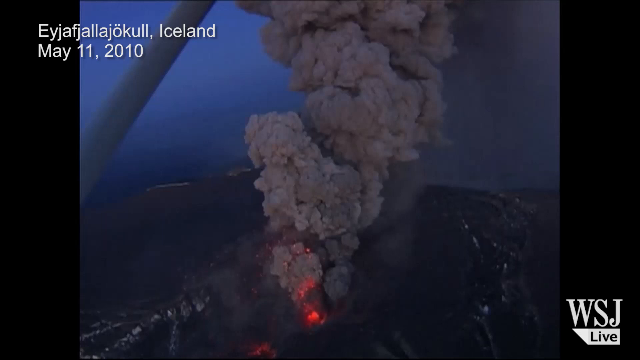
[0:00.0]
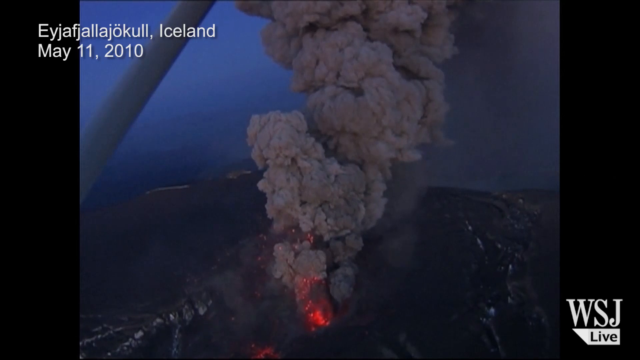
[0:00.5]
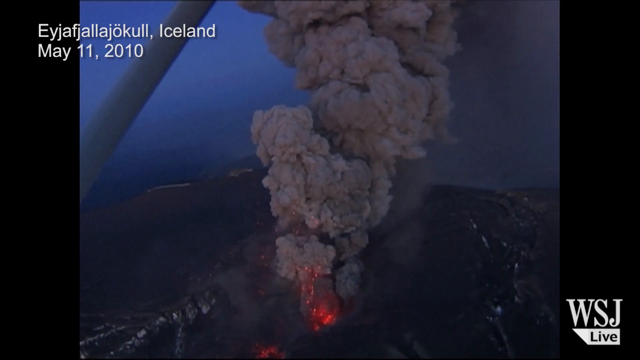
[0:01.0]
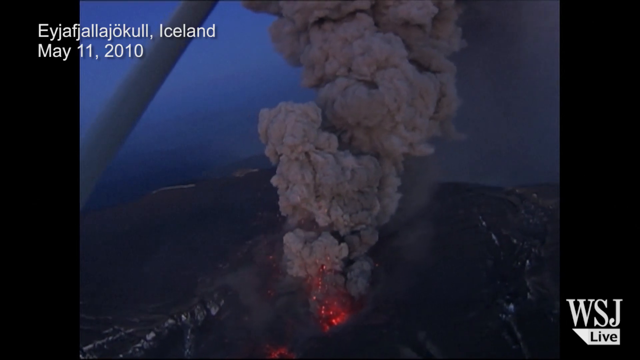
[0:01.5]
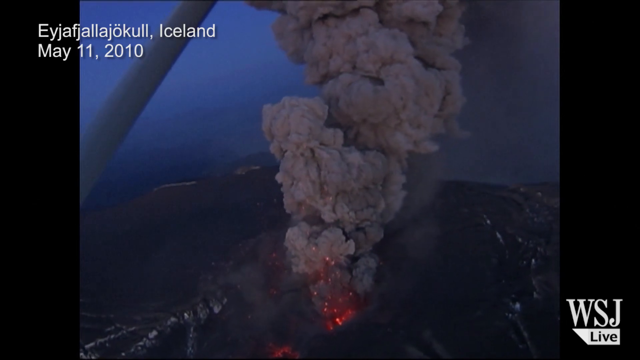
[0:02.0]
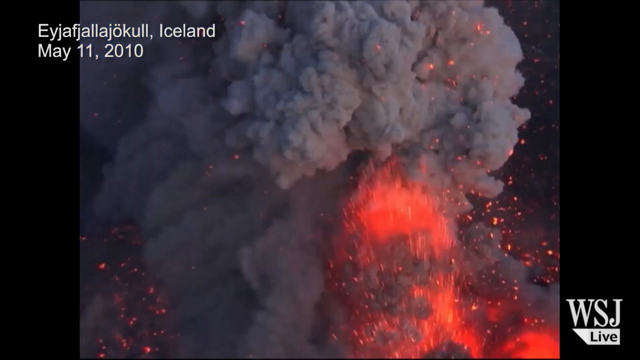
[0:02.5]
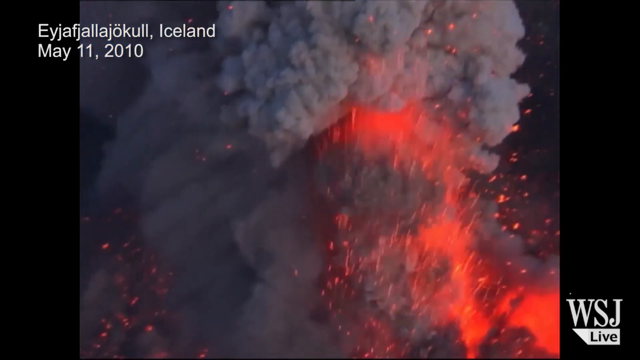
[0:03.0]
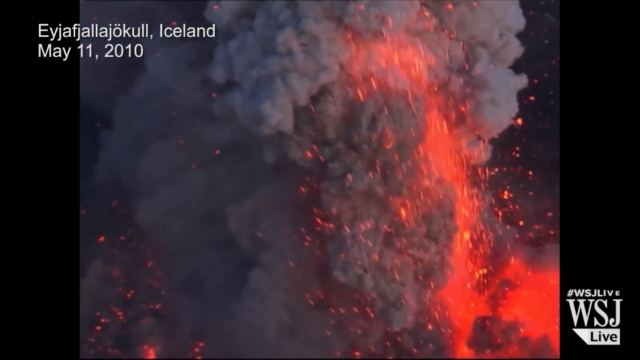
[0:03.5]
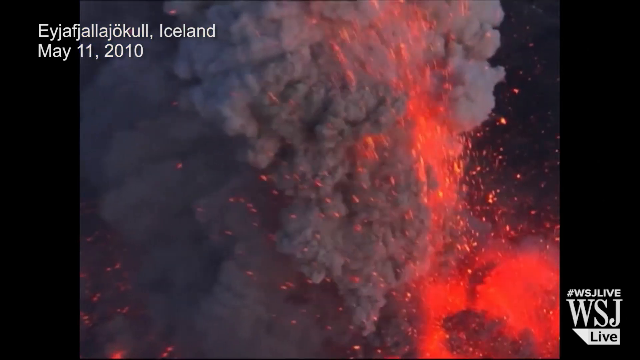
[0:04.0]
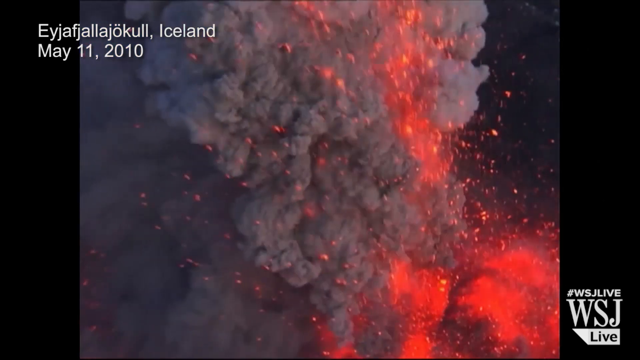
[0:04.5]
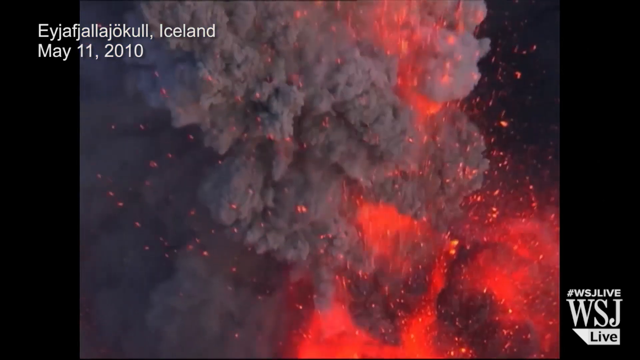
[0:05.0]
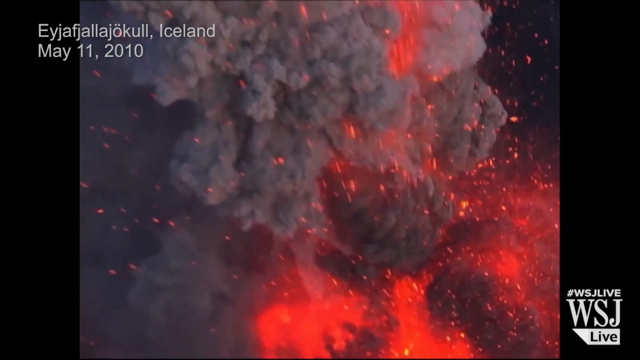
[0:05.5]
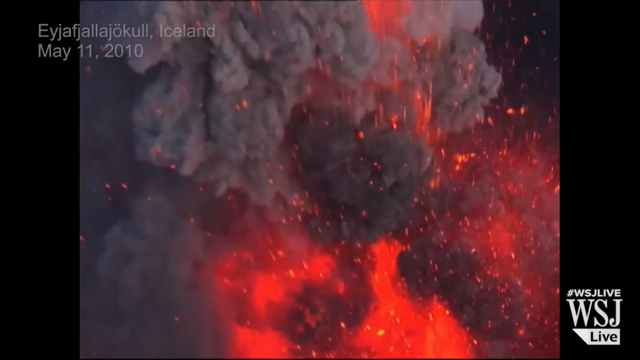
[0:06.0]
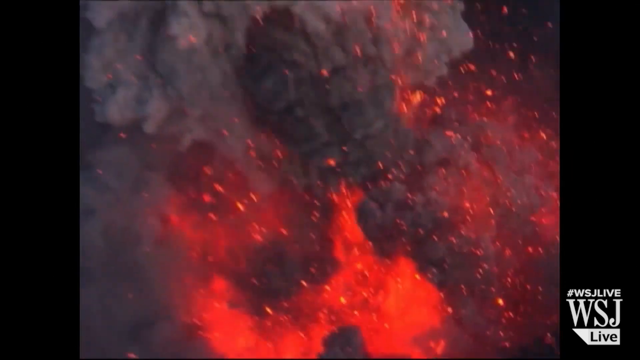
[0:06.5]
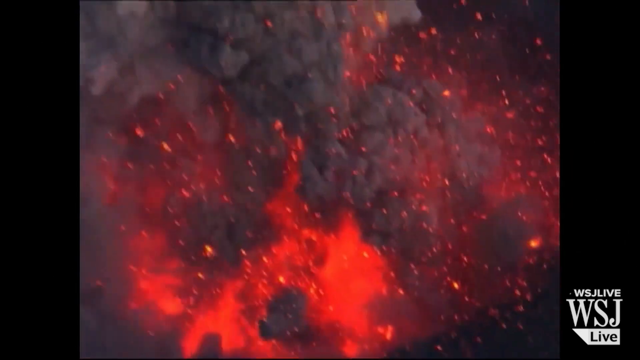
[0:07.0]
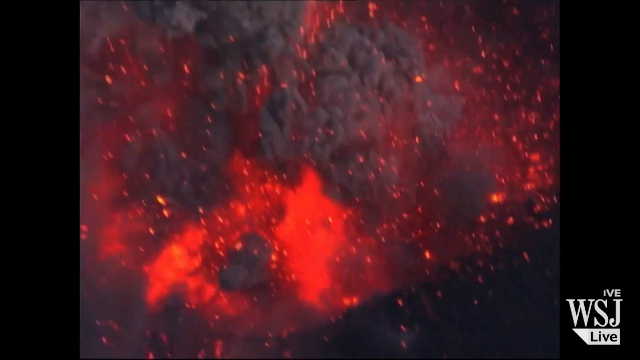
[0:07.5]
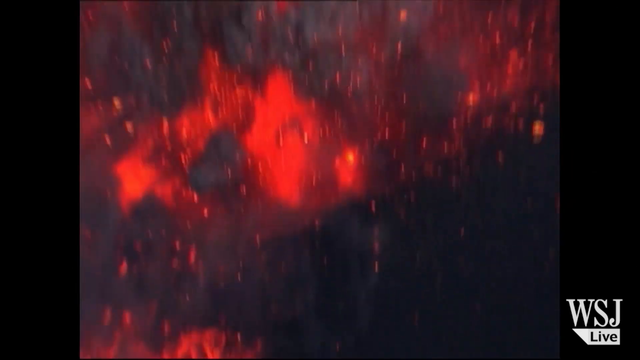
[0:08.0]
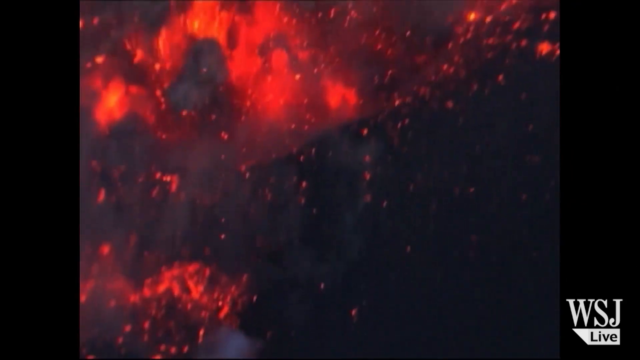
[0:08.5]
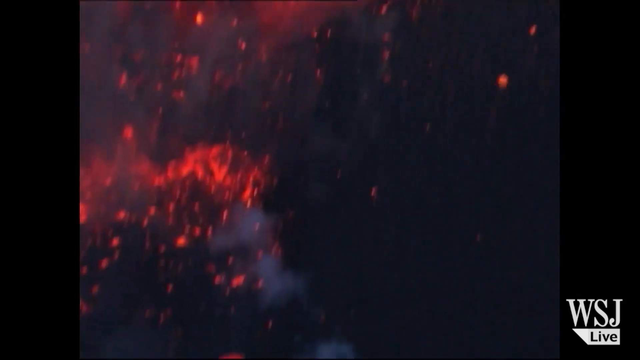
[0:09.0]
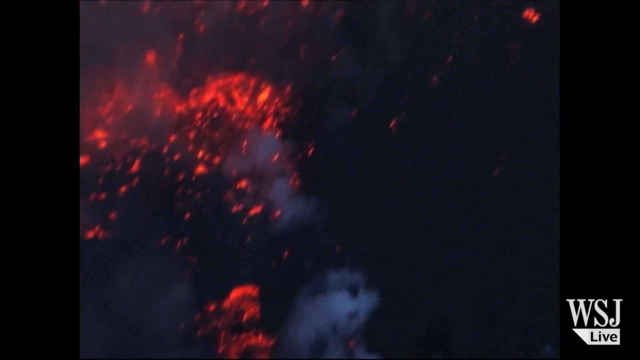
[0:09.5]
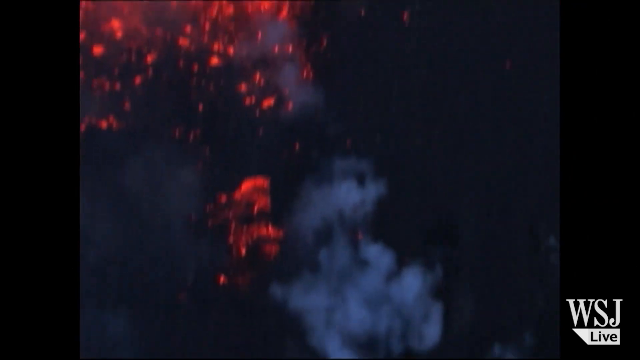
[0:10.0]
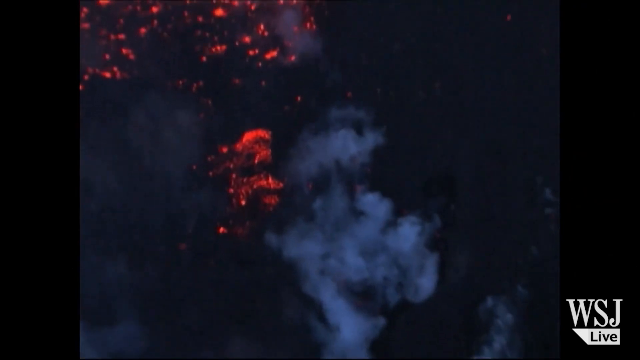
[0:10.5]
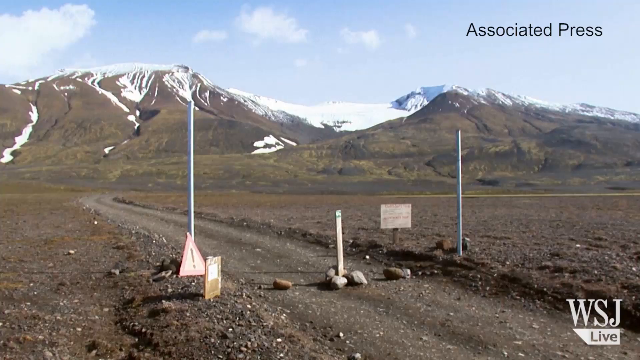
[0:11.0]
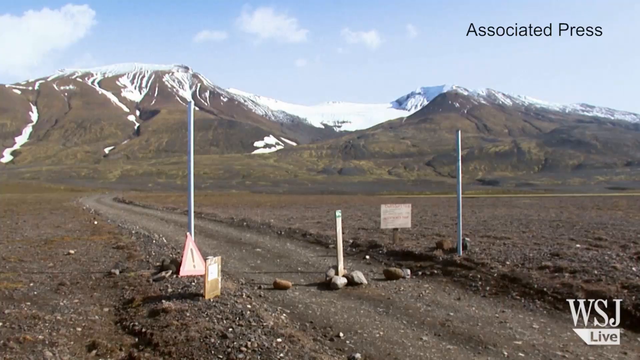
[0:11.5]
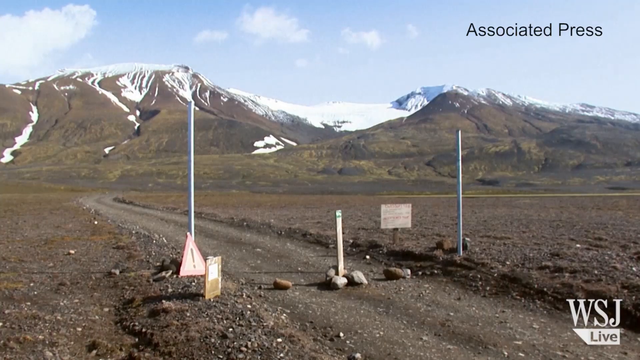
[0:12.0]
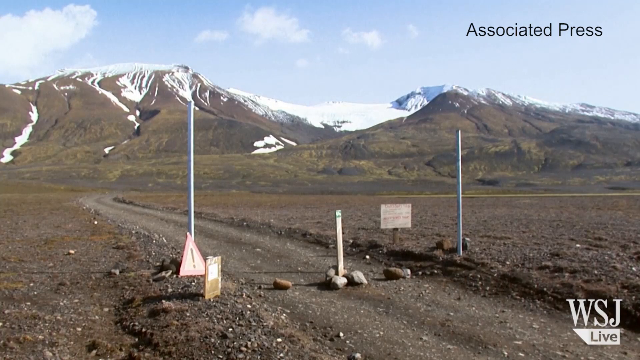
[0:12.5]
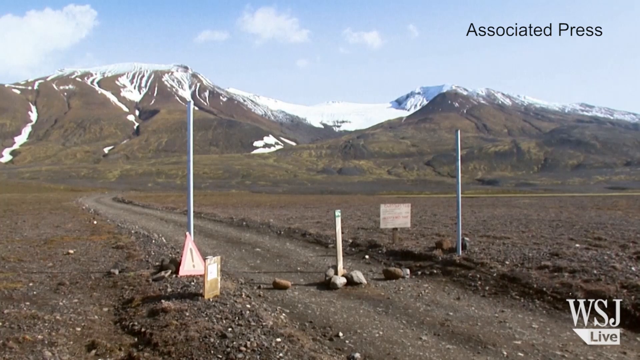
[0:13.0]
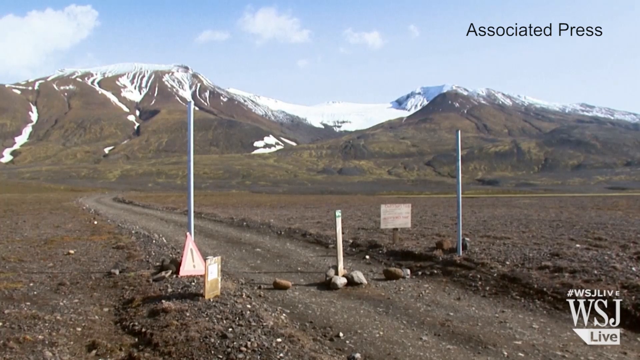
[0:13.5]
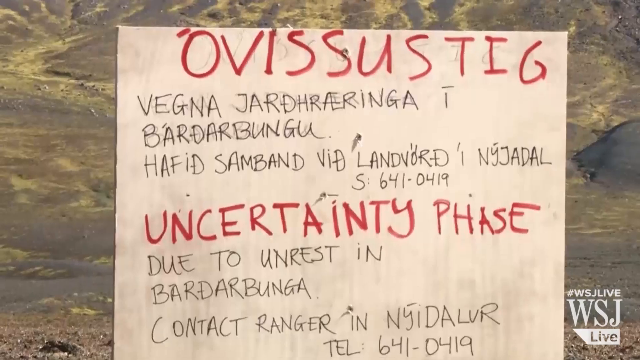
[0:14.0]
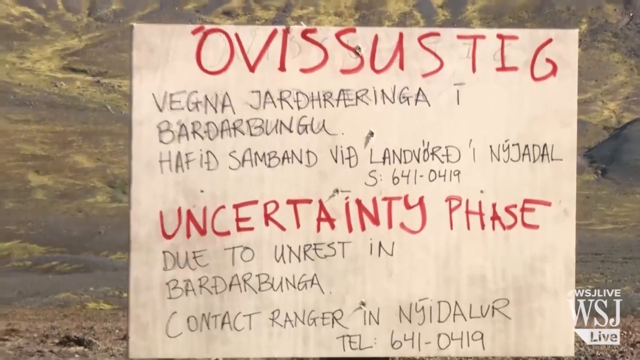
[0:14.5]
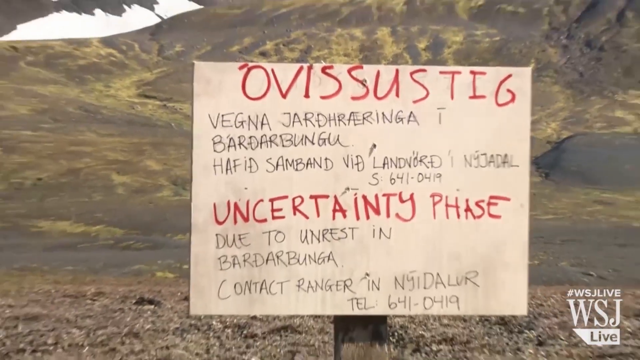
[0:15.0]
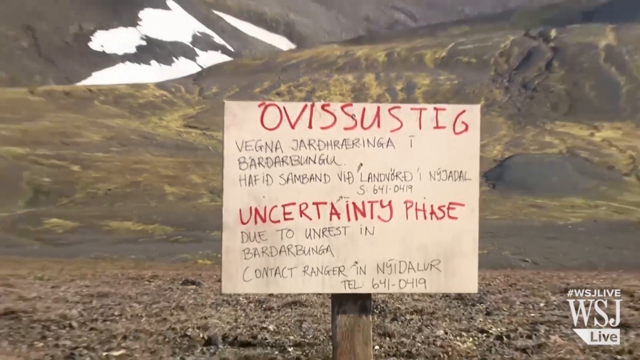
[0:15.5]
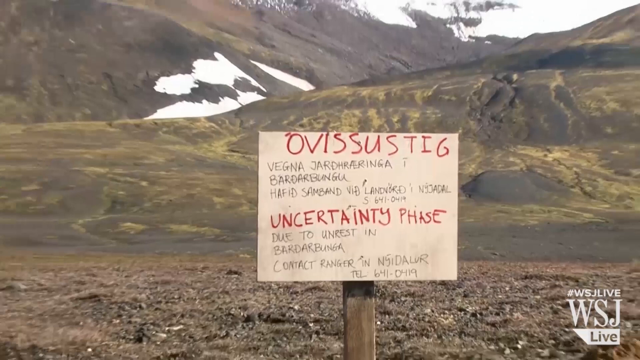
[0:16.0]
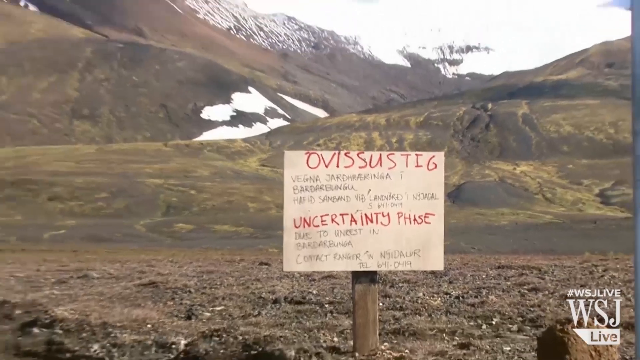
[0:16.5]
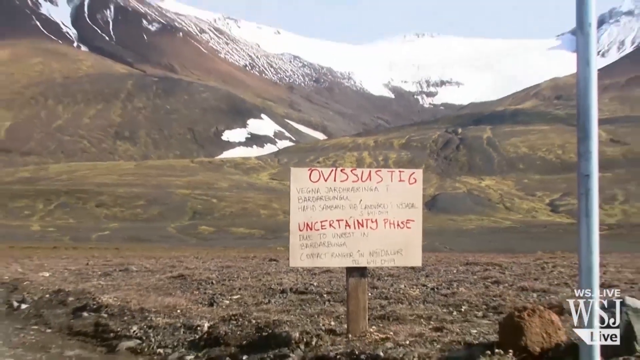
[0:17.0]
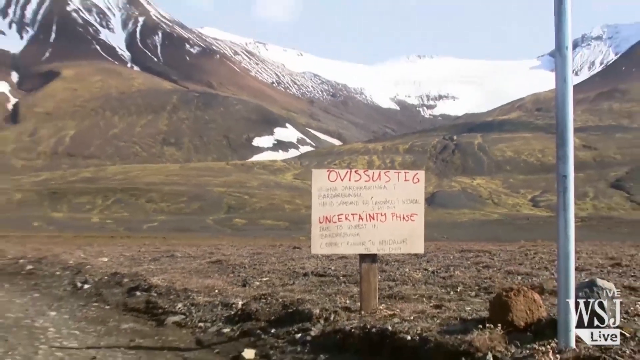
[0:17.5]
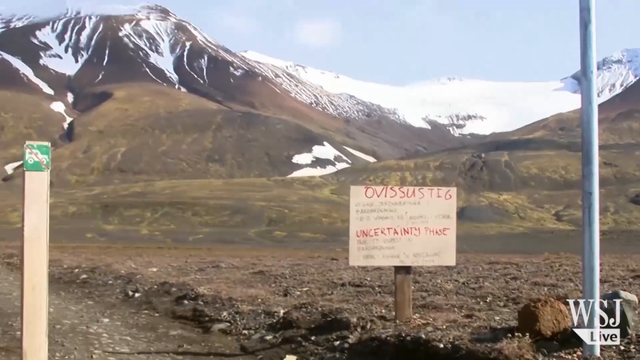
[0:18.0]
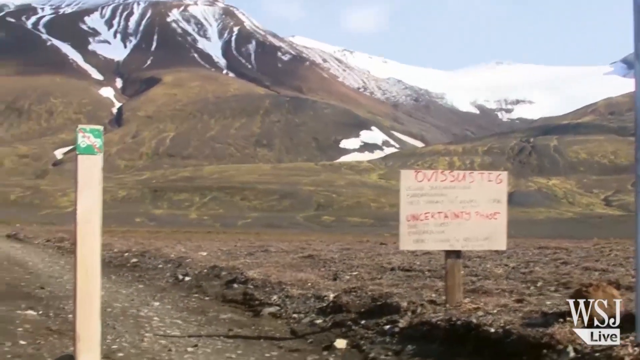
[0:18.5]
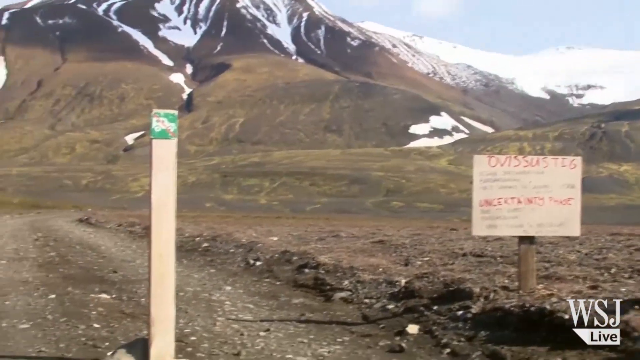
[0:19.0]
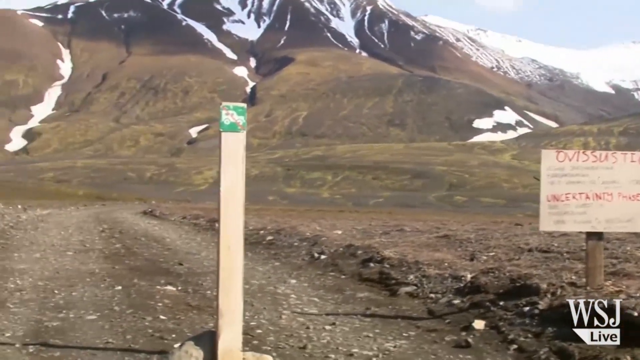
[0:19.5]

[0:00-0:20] An aerial shot opens on what looks to be a volcano. From the bottom middle of the frame, a mass of grayish smoke rises vertically all the way to the top of the frame. White text at the top left states that the location is Iceland, with the date May 11th, 2010 below it. The view is from some type of helicopter or airplane. The scene changes to a close-up of the volcano erupting: lava shoots upwards, and the same large gray smoke cloud extends diagonally toward the top left. As the lava explodes from the bottom of the frame, the camera slowly pans downwards, revealing more of the lava and the land below. The lava is a very bright red, and many tiny spots and sparks fly from it and land on the ground, leaving light red patches in several places as the camera moves slightly down. The scene changes to a mountainscape viewed from the ground, with a very large dirt field in front. There are two poles, one on the left and one on the right, and between them a long road runs diagonally toward the top left, then curves toward the mountains. The mountains are a brownish-green color, more or less, with a lot of white snow on them. Behind the mountains is a blue daytime sky, with a very white cloud at the top left and some smaller whitish clouds at the top middle. The scene then changes to a zoomed-in view of a sign in the same foreign language, apparently Swedish. As the camera seems to slowly zoom out, the sign is shown to be light brown with red and black text on it.